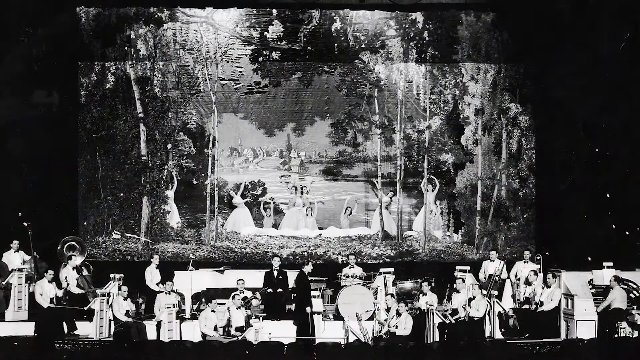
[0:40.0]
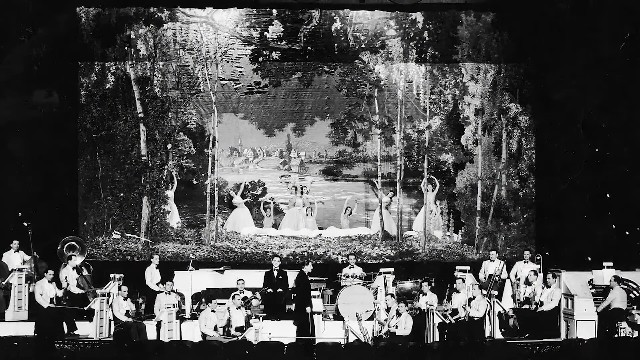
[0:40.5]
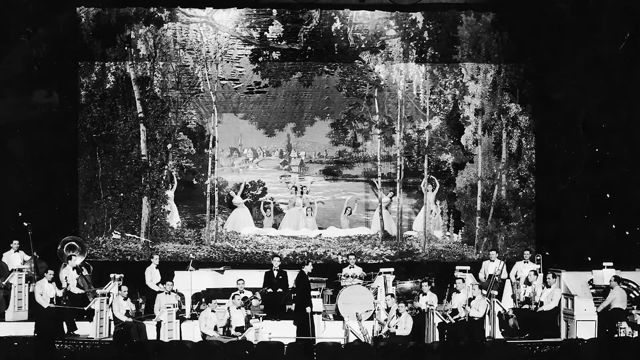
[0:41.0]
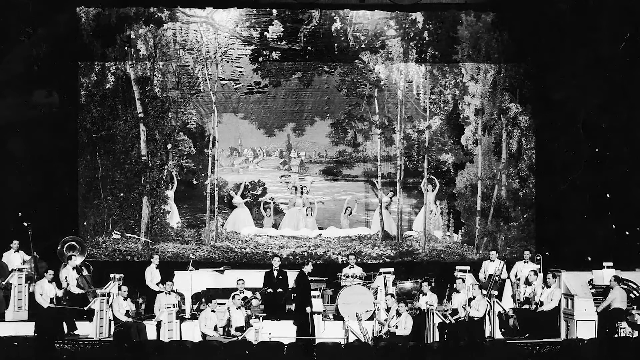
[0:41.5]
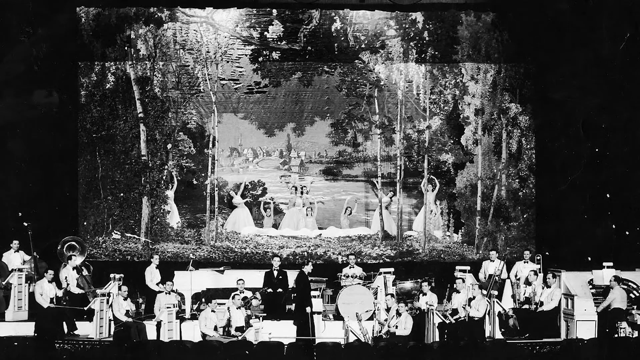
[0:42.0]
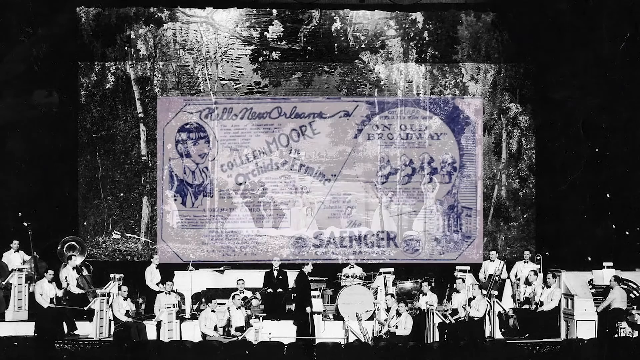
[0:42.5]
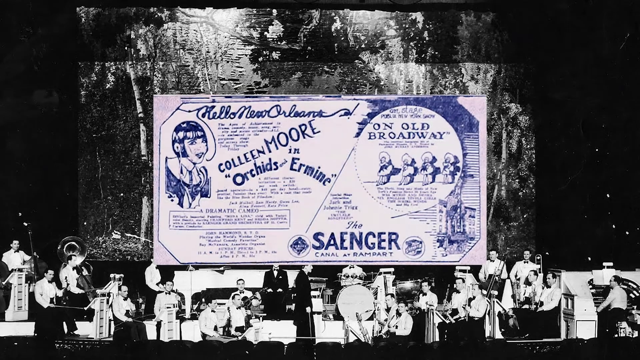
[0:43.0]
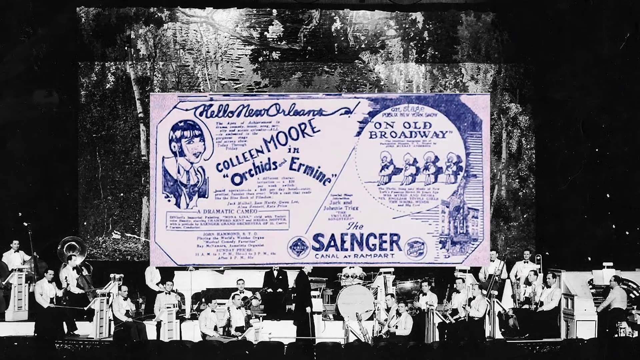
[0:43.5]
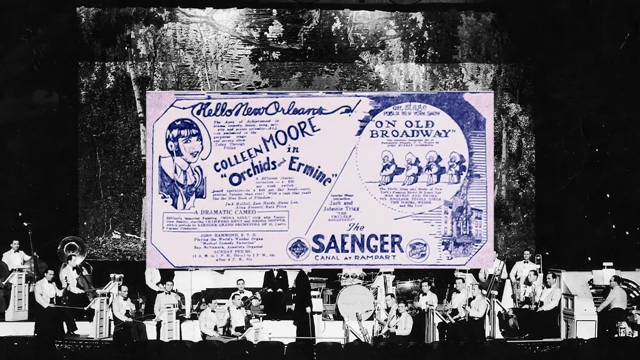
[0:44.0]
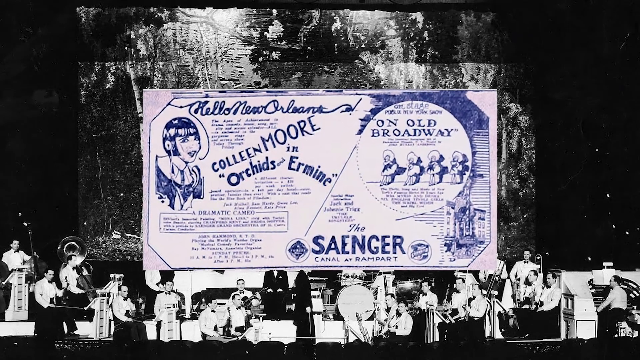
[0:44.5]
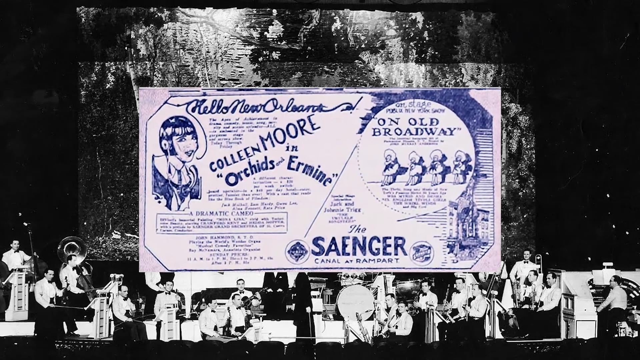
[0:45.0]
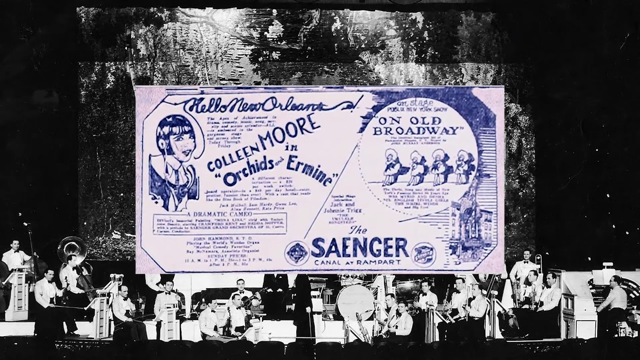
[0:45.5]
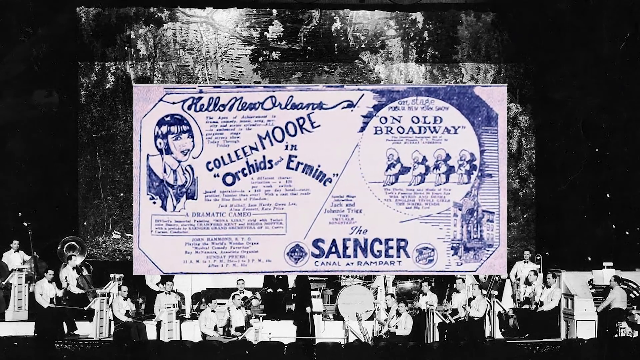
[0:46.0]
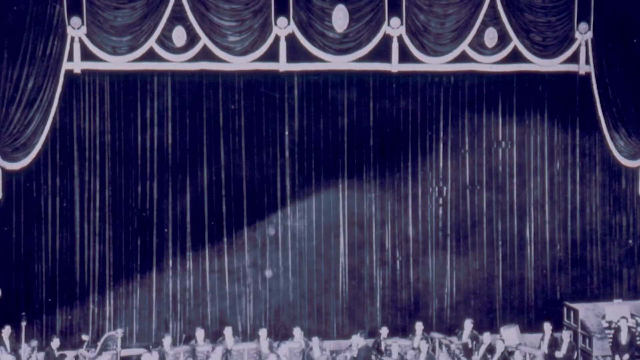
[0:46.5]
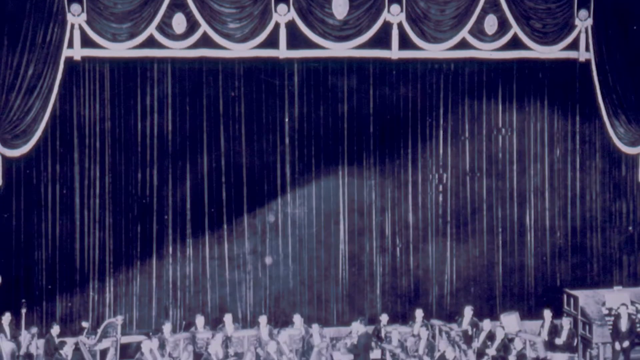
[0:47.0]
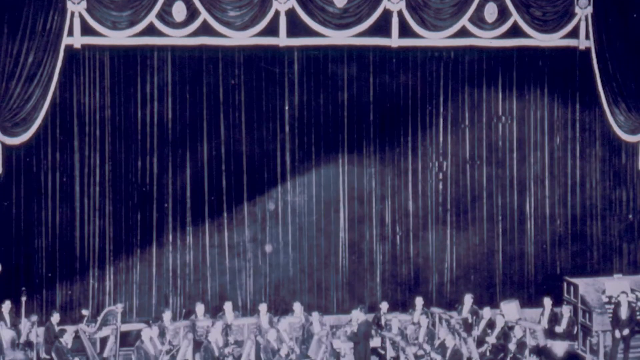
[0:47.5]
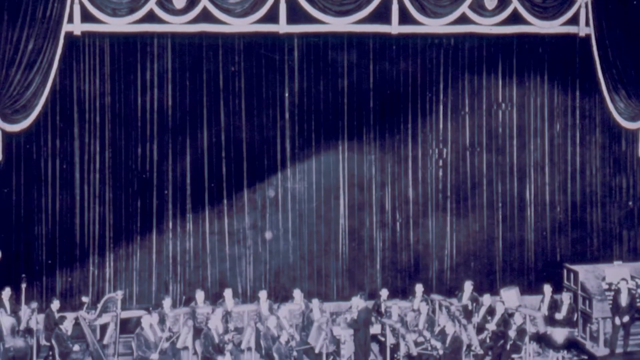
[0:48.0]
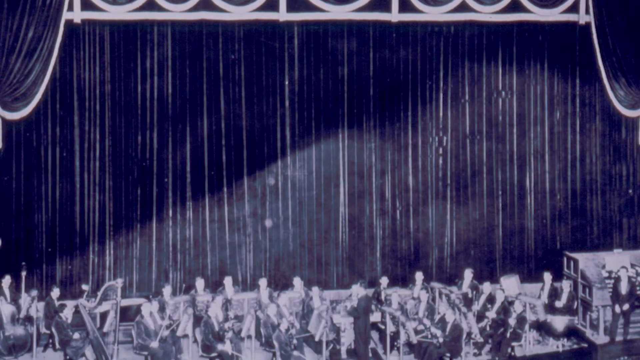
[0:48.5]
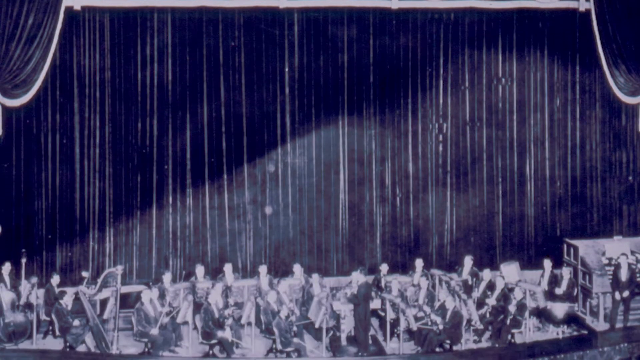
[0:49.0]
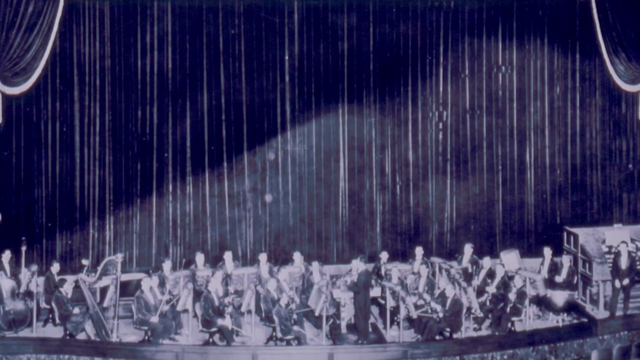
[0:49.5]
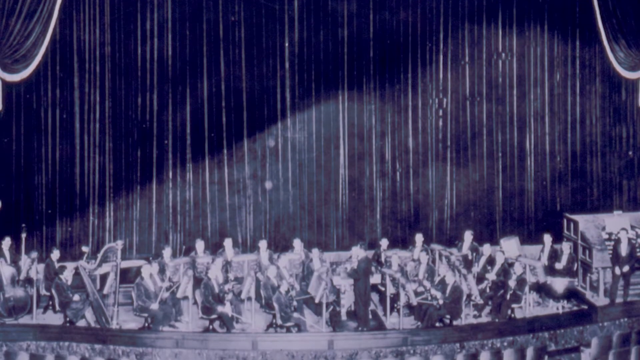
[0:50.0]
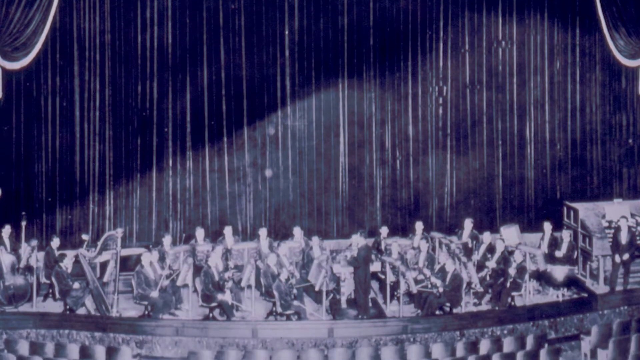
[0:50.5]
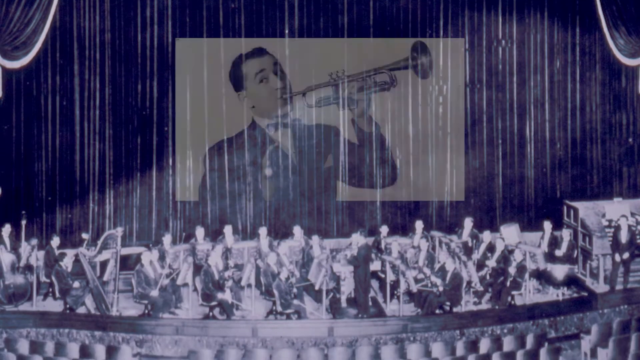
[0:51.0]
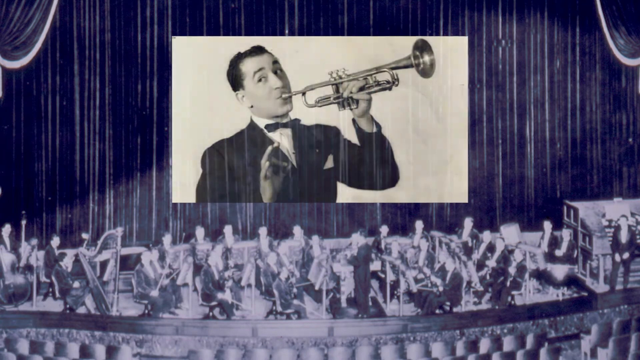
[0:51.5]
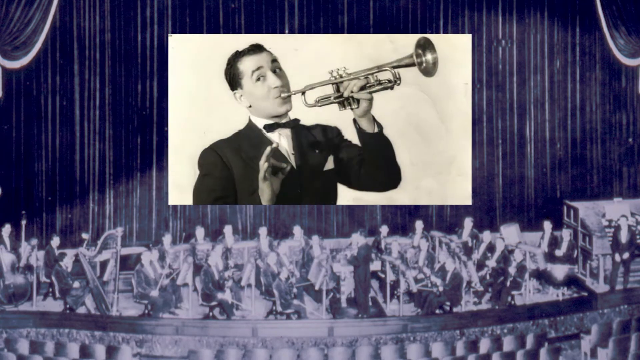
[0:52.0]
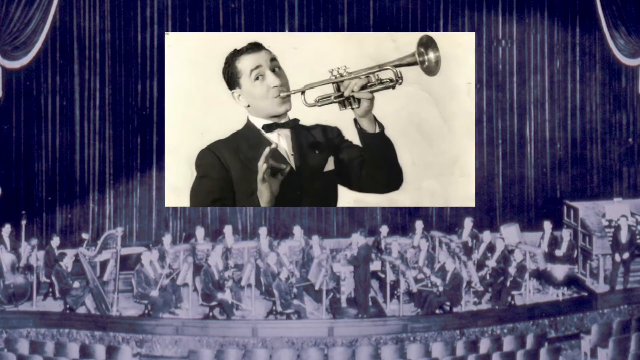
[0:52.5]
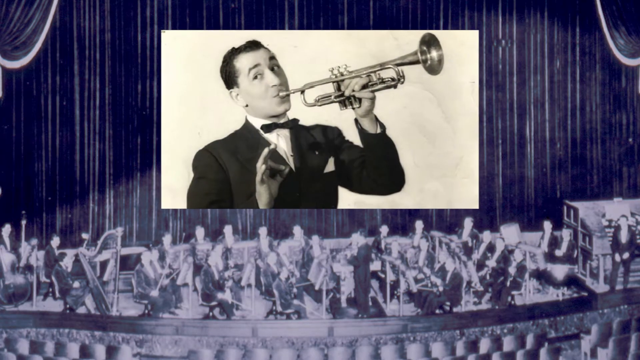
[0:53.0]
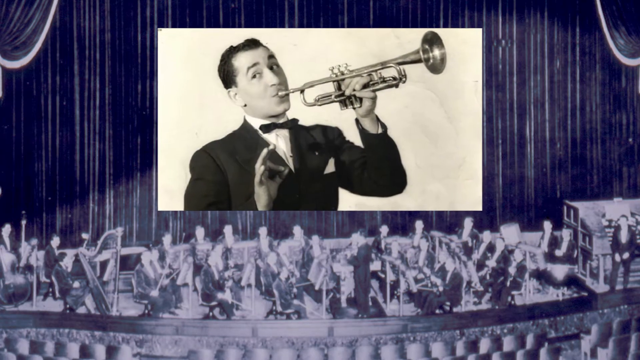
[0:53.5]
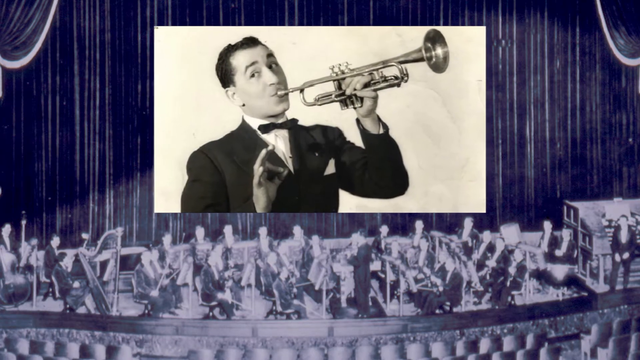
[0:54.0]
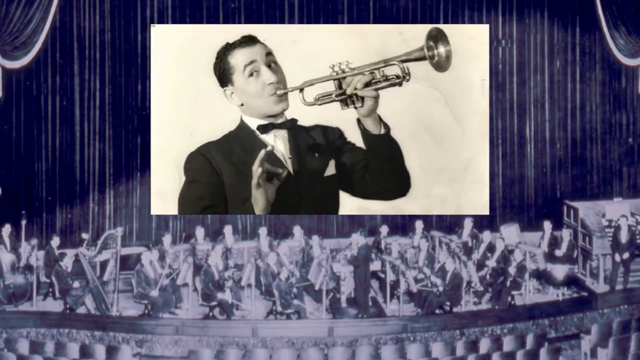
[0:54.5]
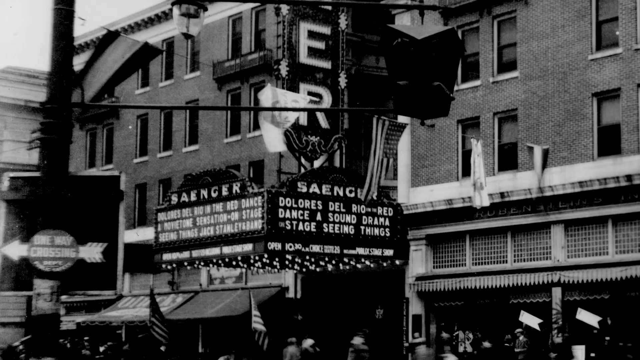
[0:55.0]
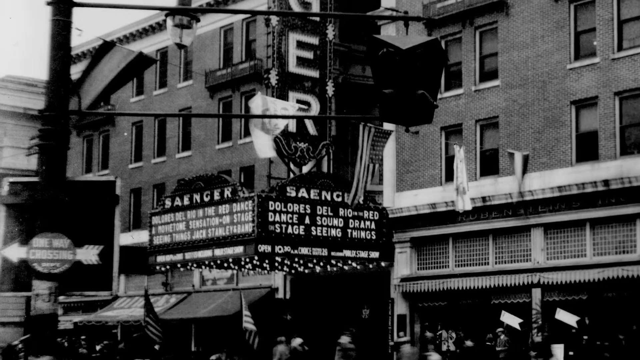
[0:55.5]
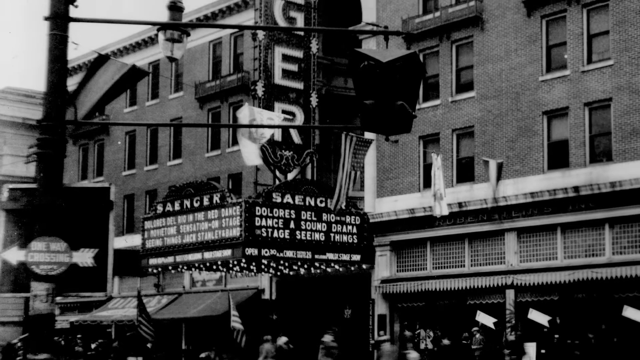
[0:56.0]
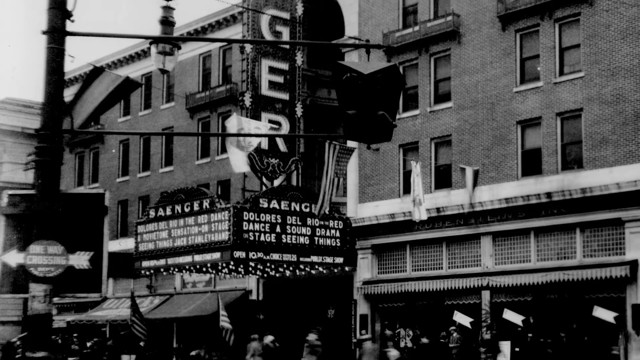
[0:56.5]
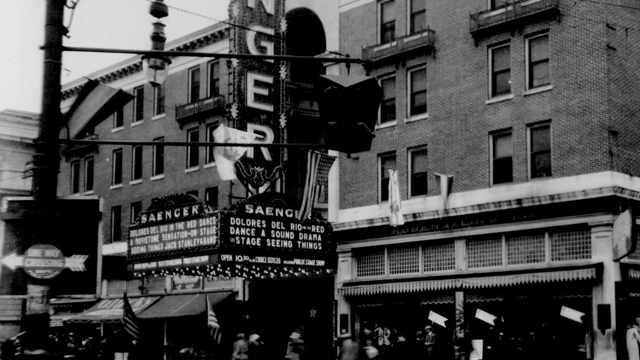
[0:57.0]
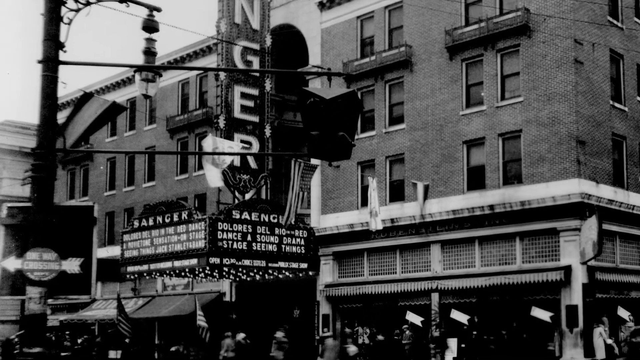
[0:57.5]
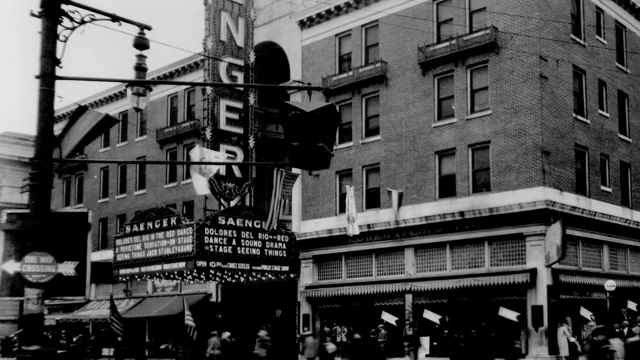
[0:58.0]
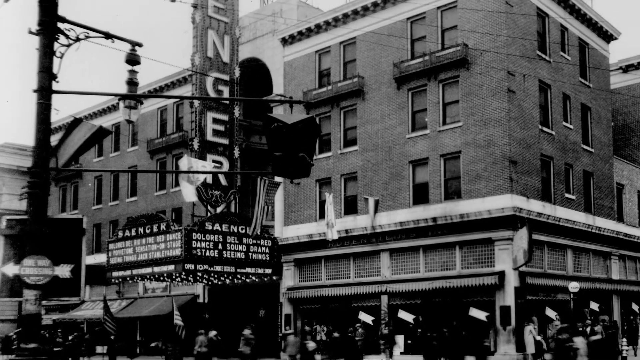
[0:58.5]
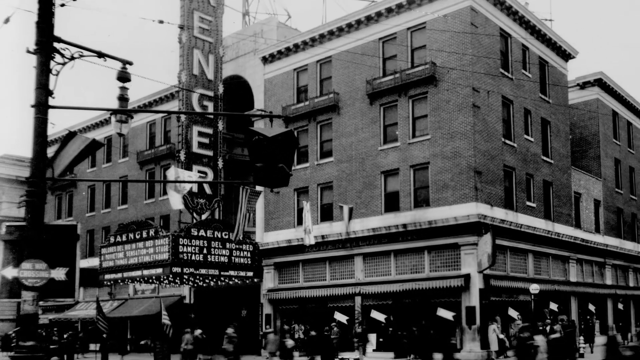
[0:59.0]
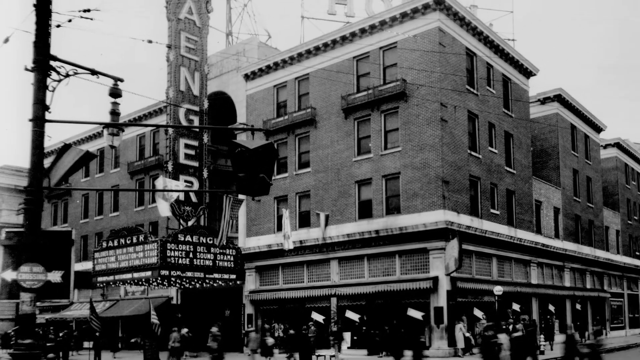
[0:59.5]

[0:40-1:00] People who look like ballerinas appear, followed by what looks like an orchestra on a stage designed to resemble a bit of a forest, giving a magical feeling. A picture of a Saenger poster follows, then another picture of an orchestra, this time with no ballerina dancers in the background, just a plain backdrop of what looks like black curtains covering everything. A man plays an instrument; he wears a black suit with a bow tie and a white shirt and has short black hair. The outside of the Saenger theatre is shown again, this time not as a drawing but the building itself, which is big and has a vintage look.